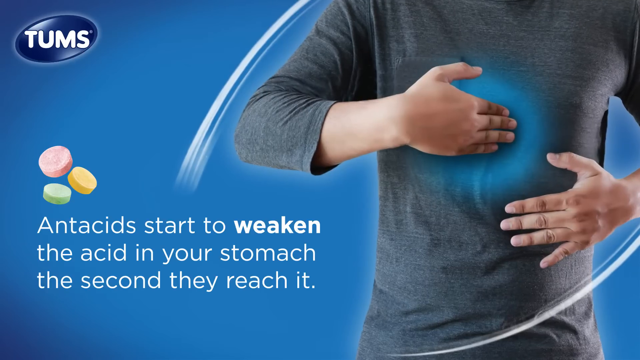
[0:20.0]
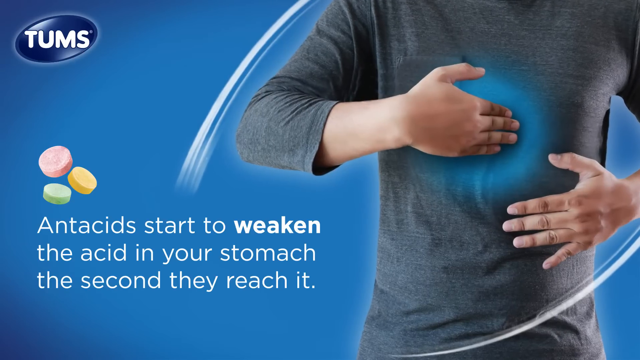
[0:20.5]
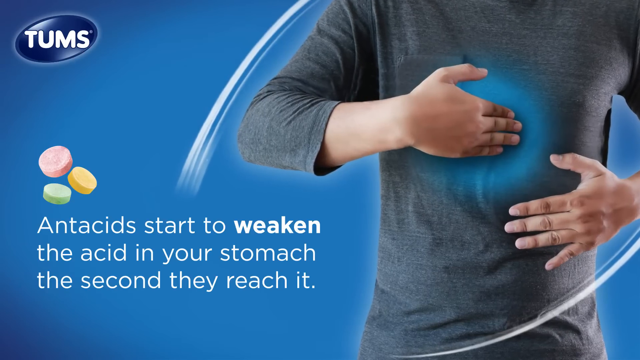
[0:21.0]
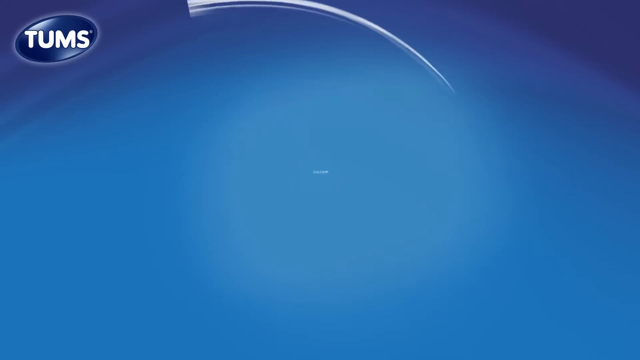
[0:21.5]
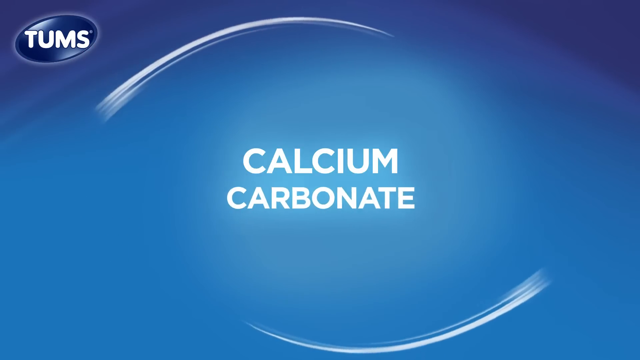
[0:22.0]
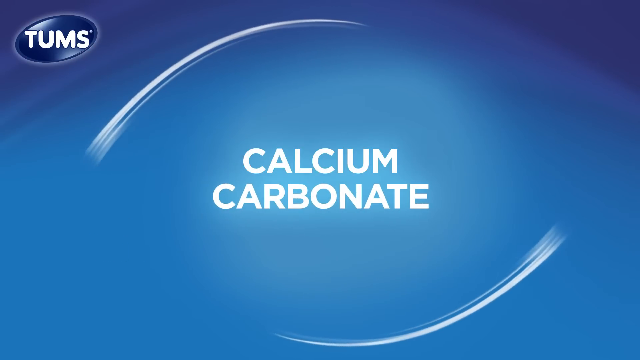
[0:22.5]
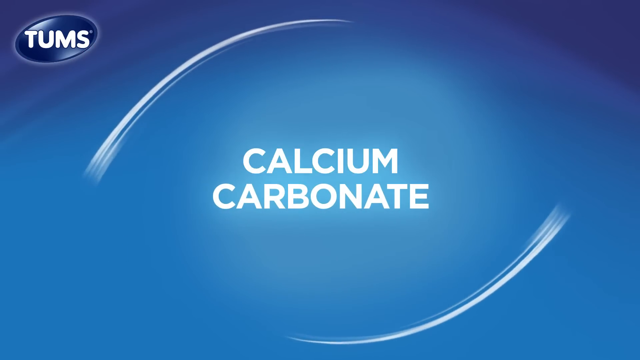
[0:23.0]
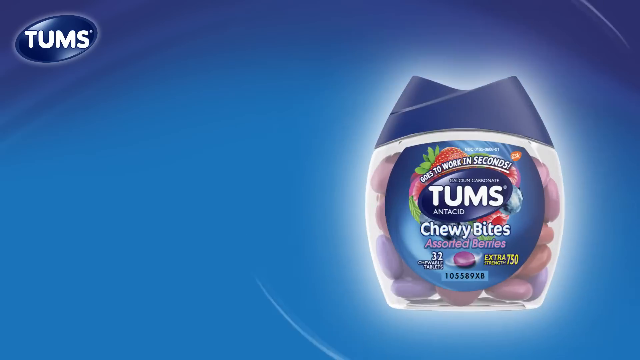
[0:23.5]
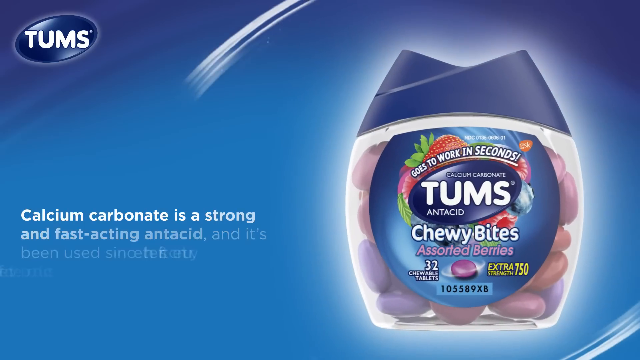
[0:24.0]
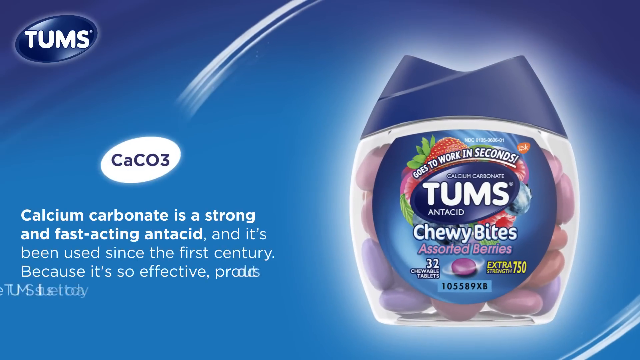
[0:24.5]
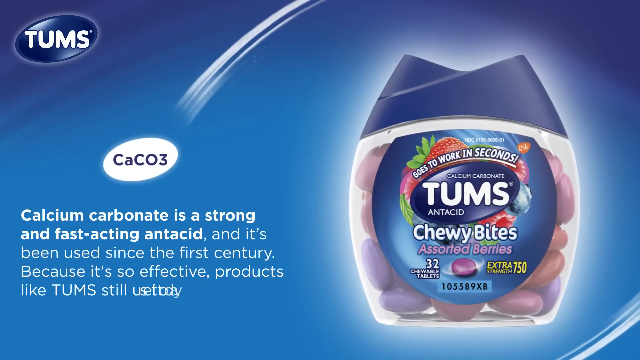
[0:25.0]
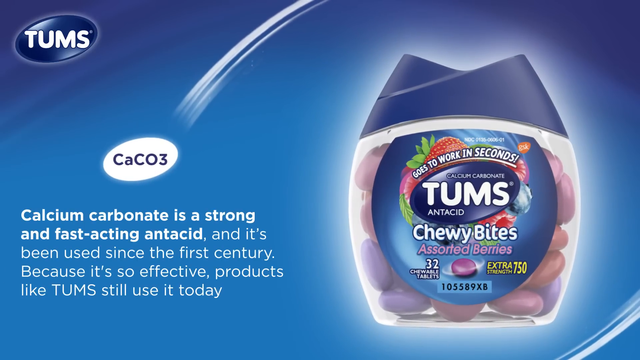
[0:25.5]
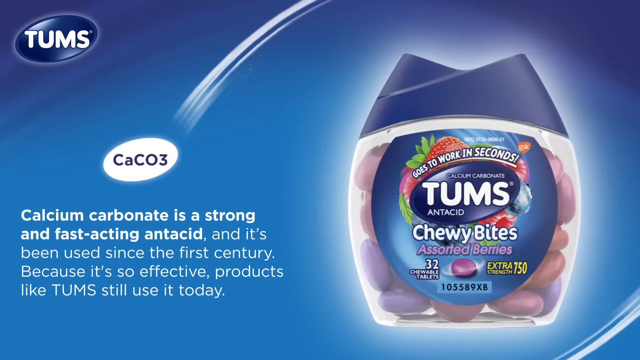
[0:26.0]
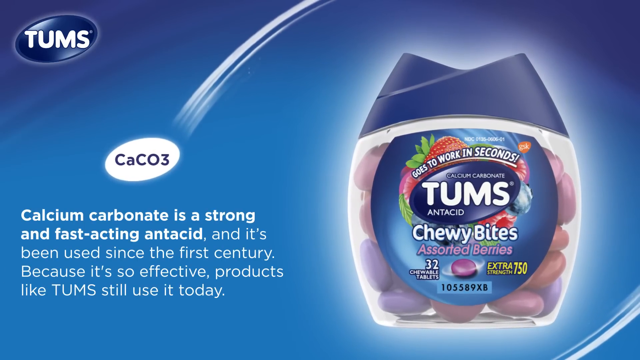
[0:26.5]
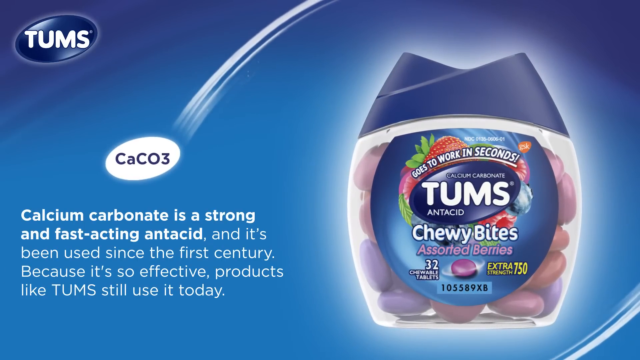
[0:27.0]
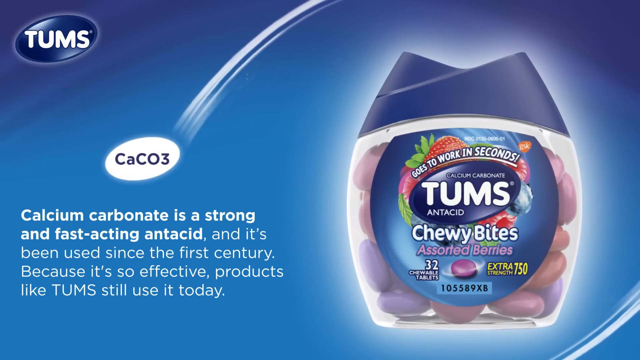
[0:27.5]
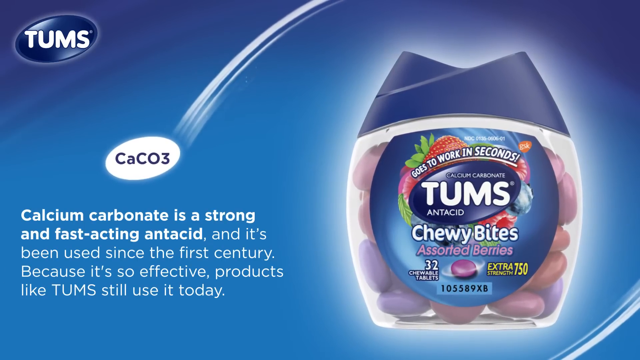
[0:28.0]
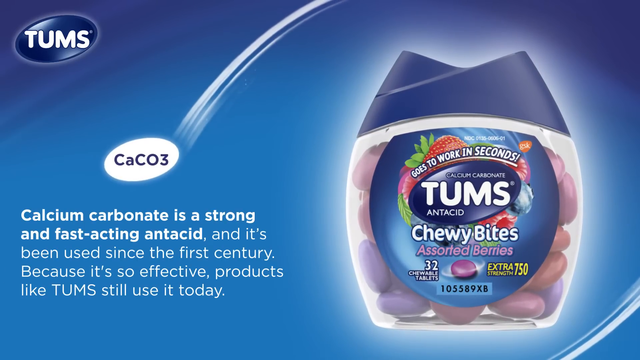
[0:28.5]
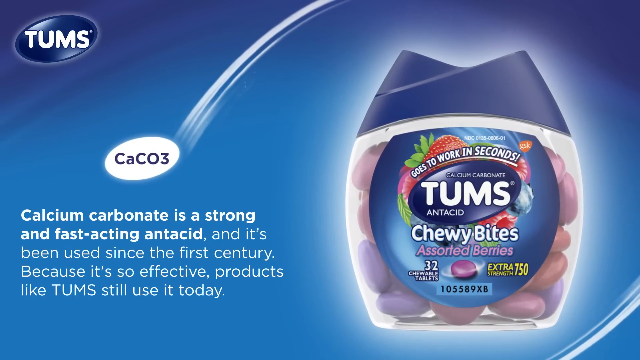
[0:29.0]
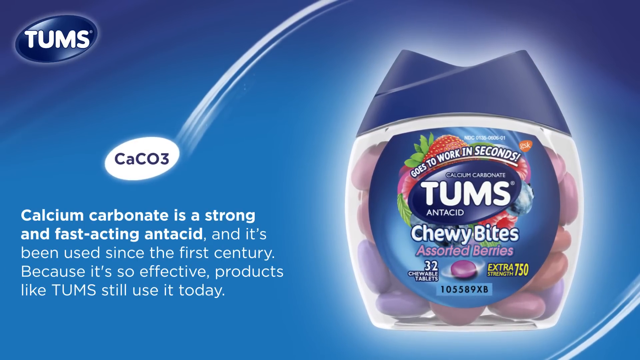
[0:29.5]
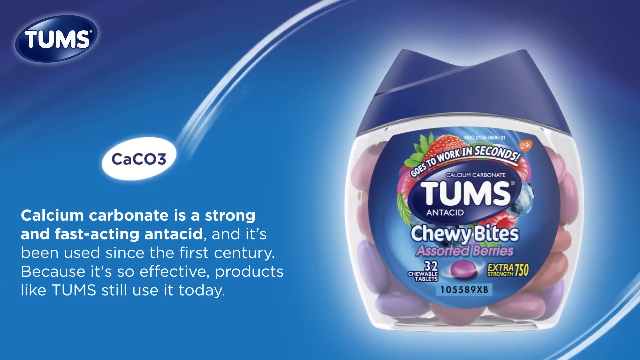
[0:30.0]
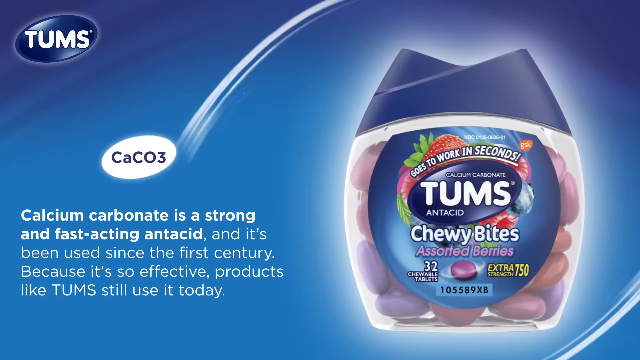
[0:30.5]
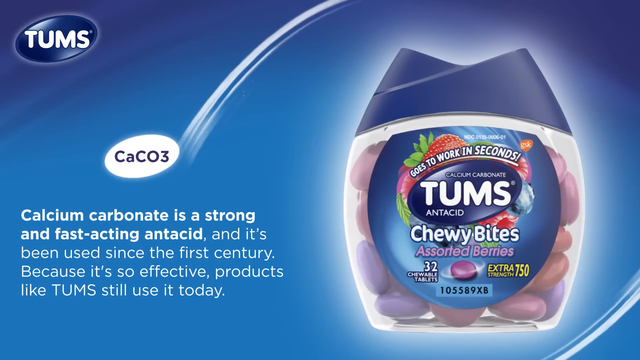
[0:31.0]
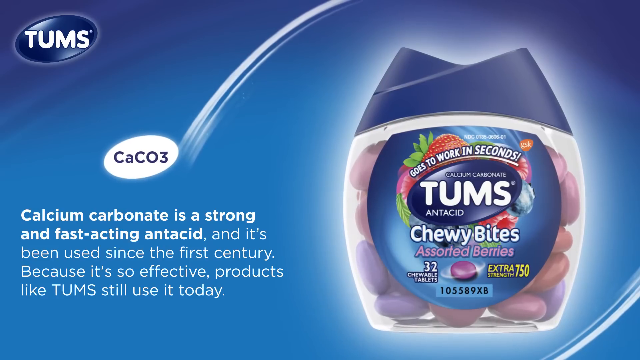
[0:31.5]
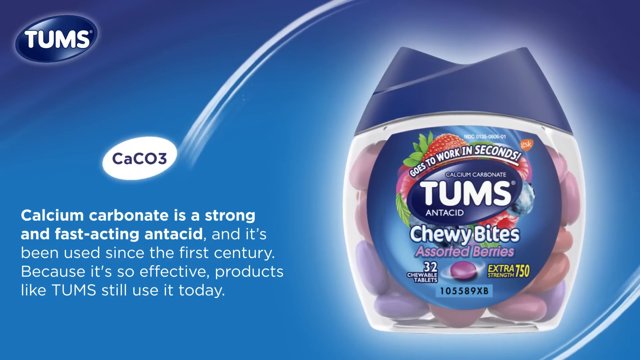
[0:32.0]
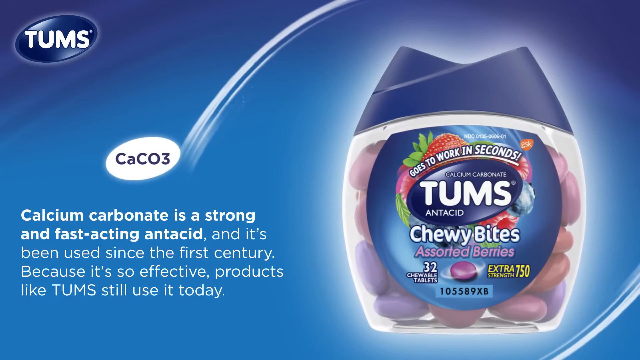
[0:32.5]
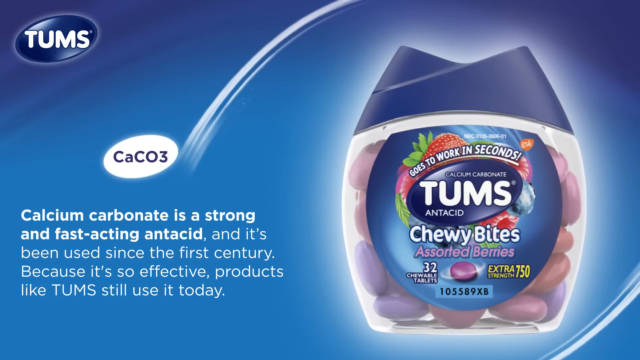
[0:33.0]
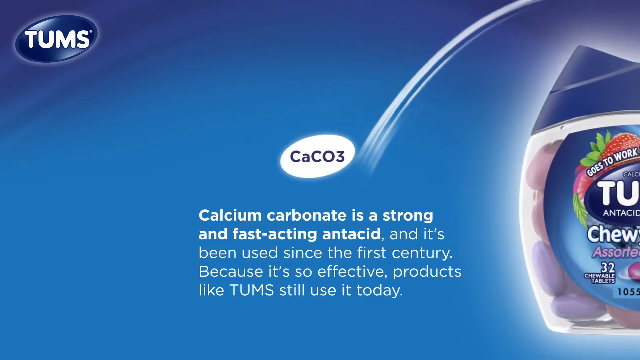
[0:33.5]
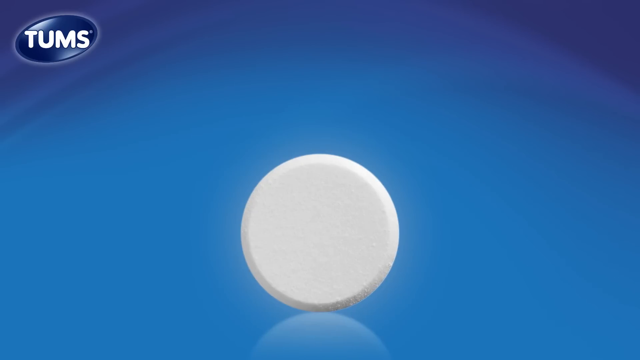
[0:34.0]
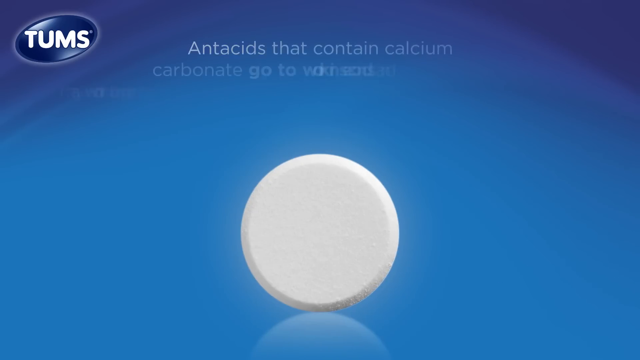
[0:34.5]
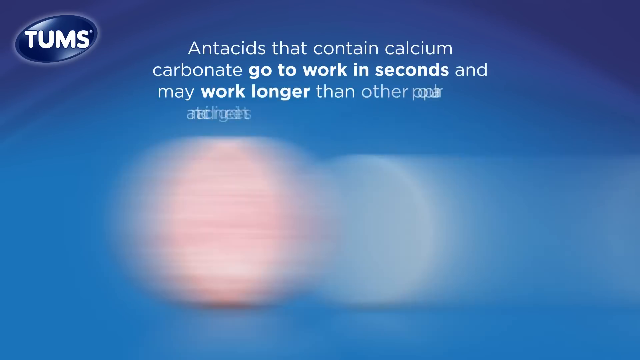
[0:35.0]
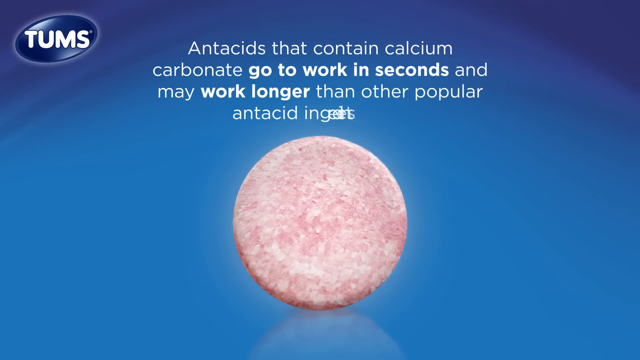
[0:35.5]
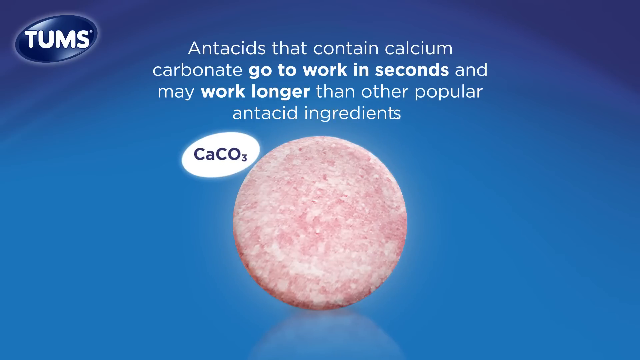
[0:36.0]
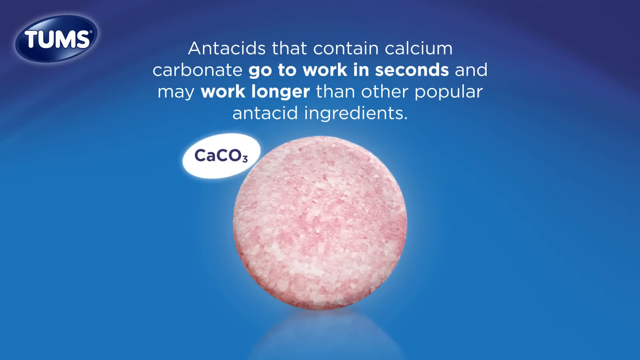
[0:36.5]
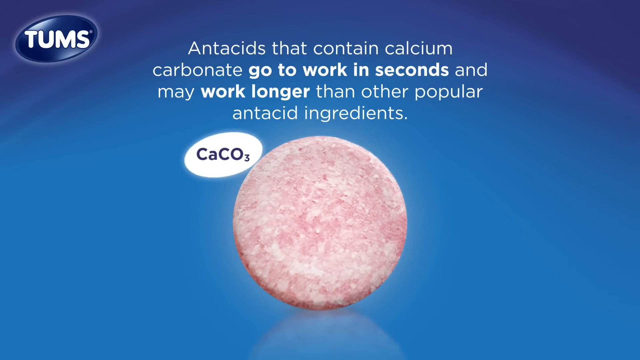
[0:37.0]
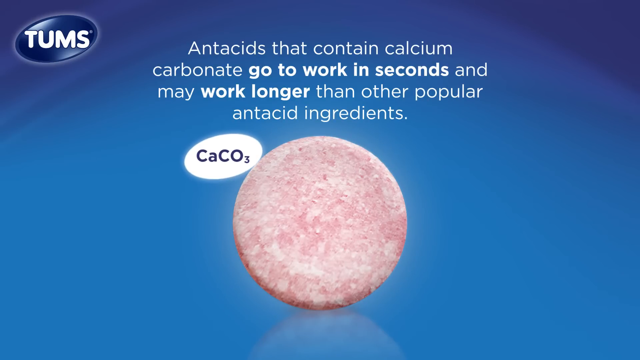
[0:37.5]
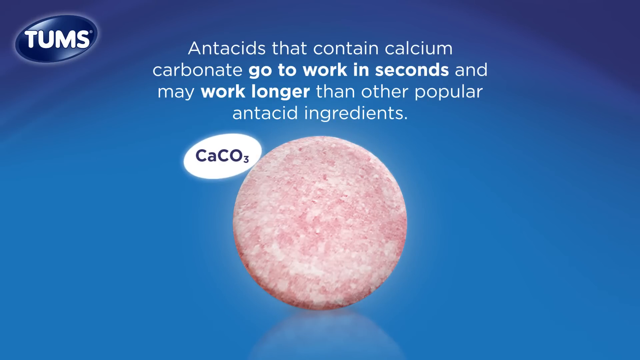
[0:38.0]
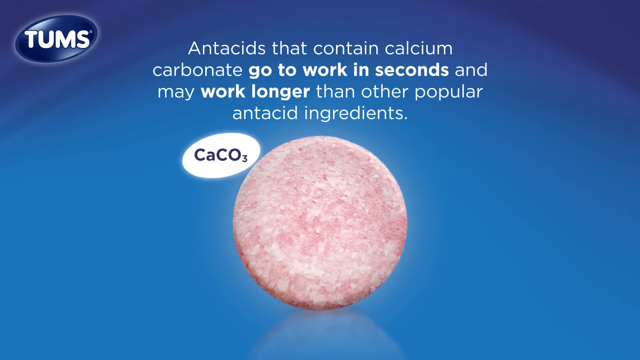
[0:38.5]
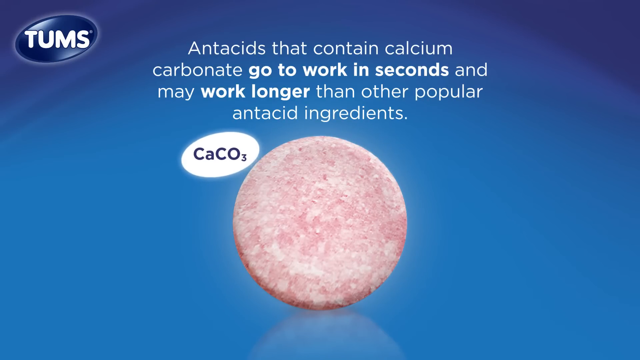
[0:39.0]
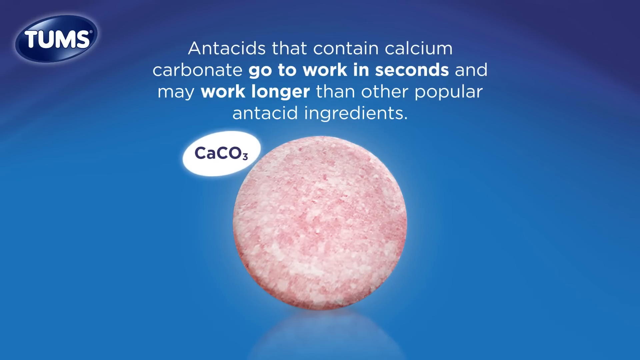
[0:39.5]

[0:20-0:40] A man holds something over his chest, with what looks like a blue spot underneath where he is holding. The Tums logo is at the top left, and white text at the bottom reads "antacid starts to weaken the acid in your stomach the second they reach it." A new scene with a blue background follows, and "calcium carbonate" comes up in white text. Tums Chewy Bites pop up on the right, and on the left white text reads "CaCO2, calcium carbonate is a strong, fast-acting antacid. It's been used since the first century because it's so effective. Products like Tums still use it today." The Tums Chewy Bites get bigger and the CaCO2 element moves. Another scene pops up with text reading "antacids that contain calcium carbonate go to work in seconds and may work longer than other antacid ingredients," and an antacid tablet appears on the screen below the text.